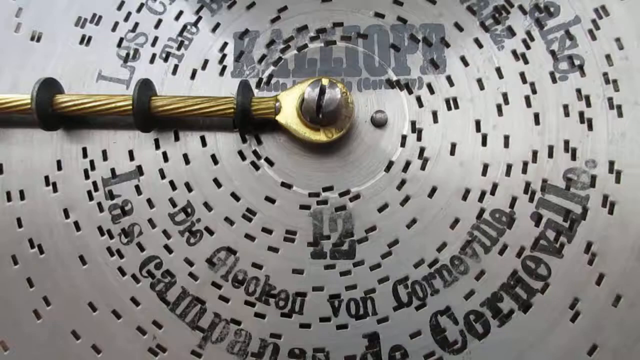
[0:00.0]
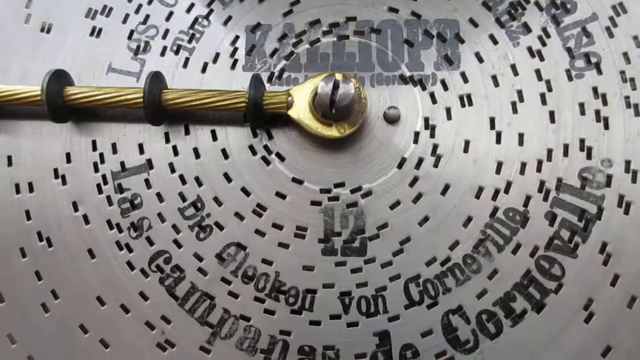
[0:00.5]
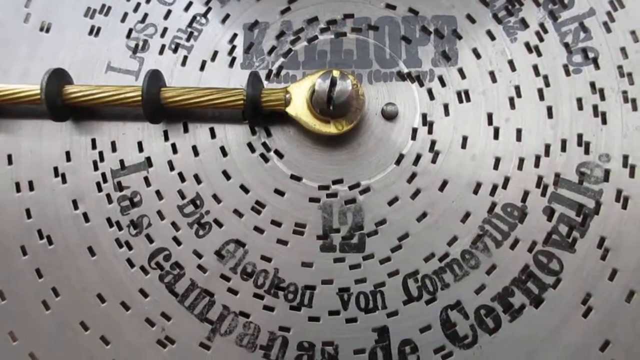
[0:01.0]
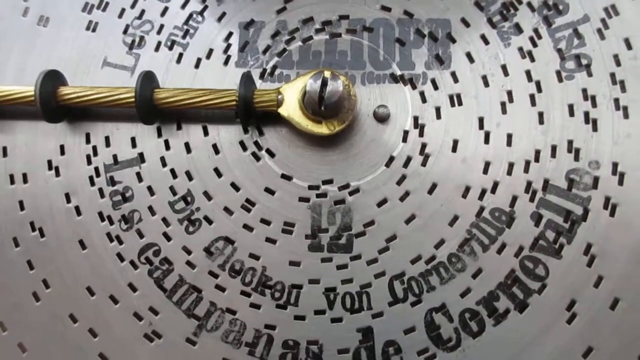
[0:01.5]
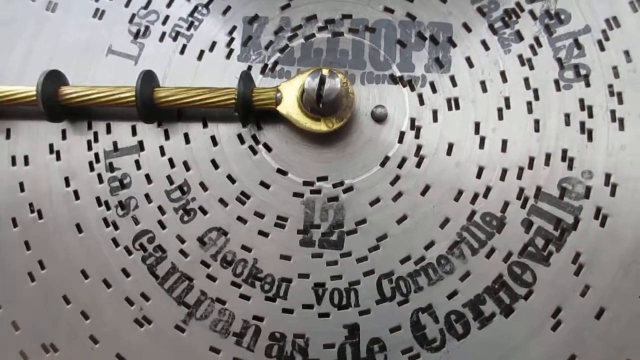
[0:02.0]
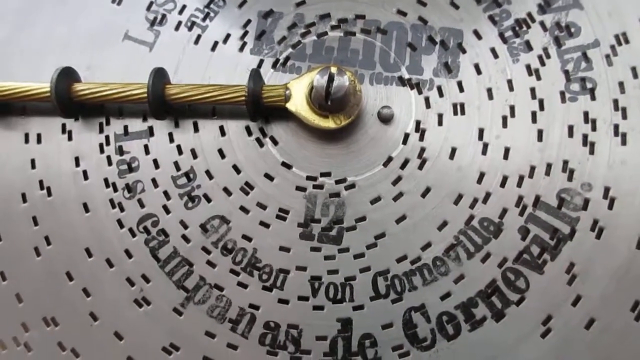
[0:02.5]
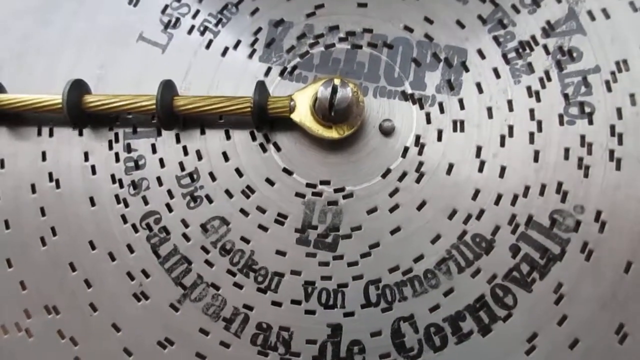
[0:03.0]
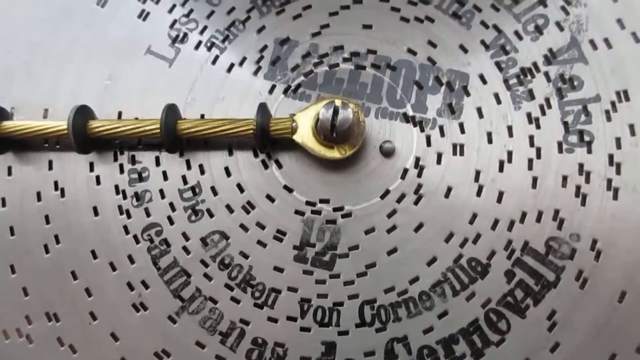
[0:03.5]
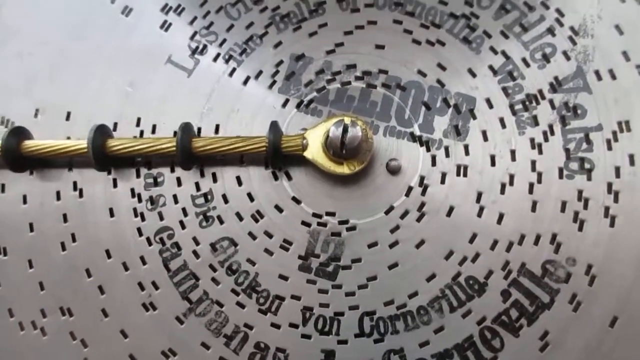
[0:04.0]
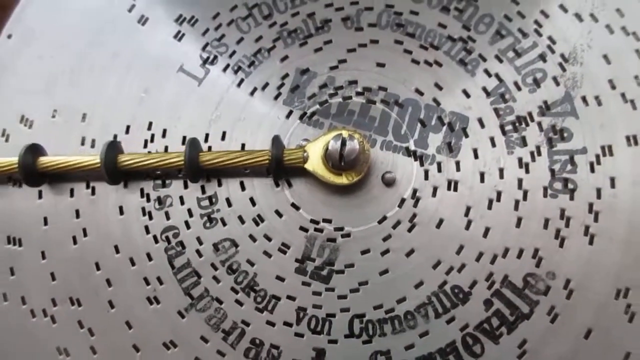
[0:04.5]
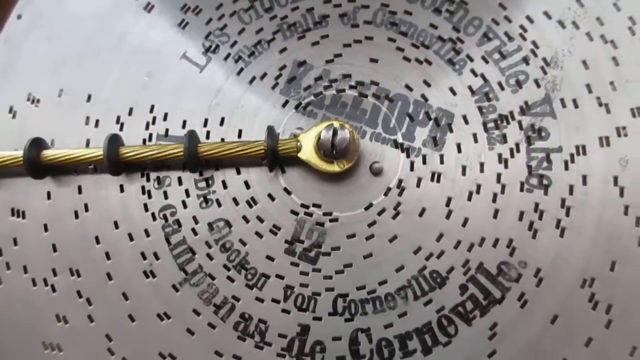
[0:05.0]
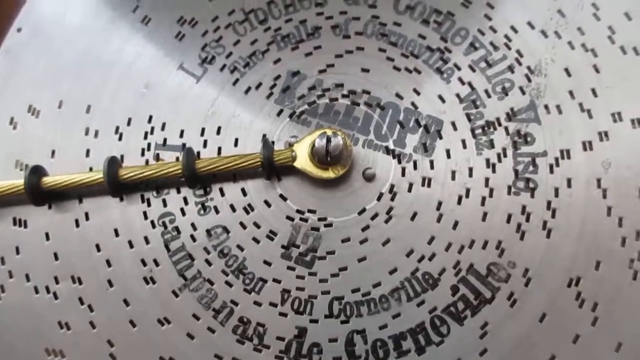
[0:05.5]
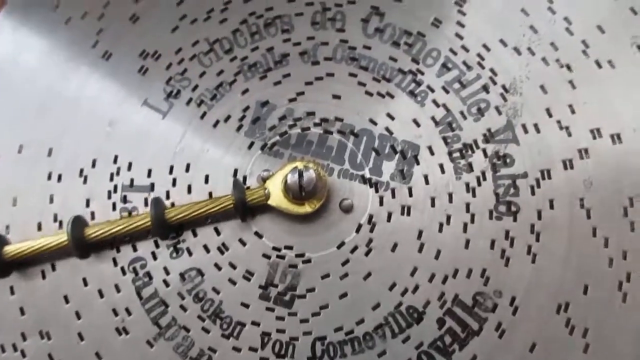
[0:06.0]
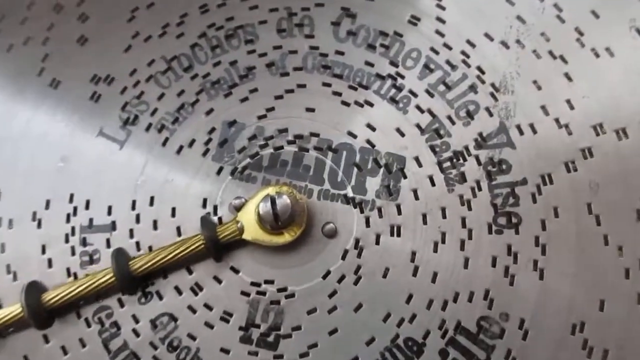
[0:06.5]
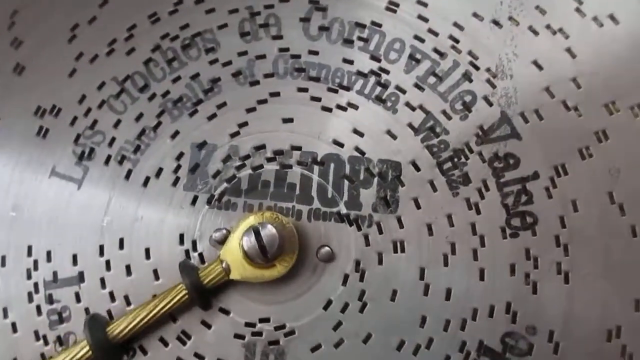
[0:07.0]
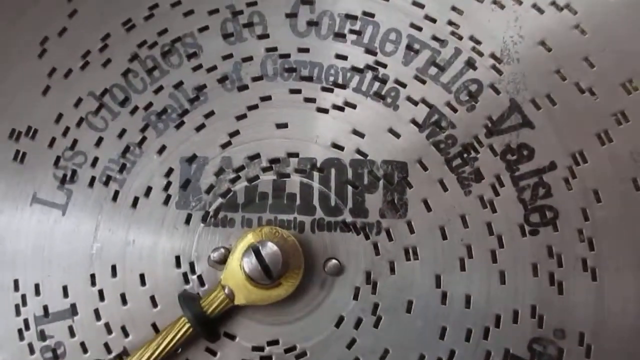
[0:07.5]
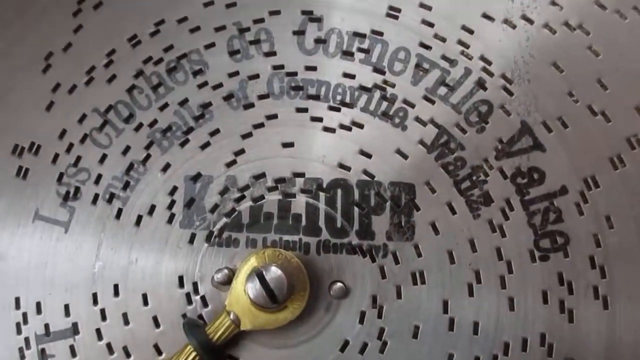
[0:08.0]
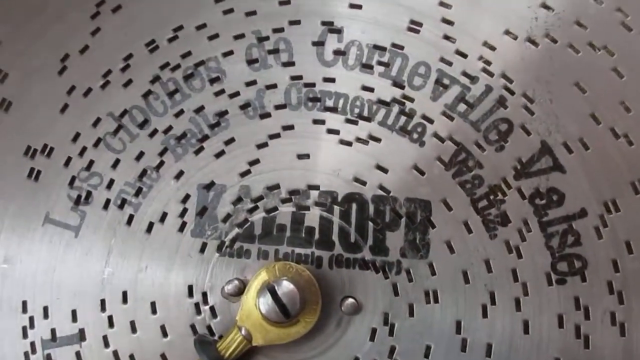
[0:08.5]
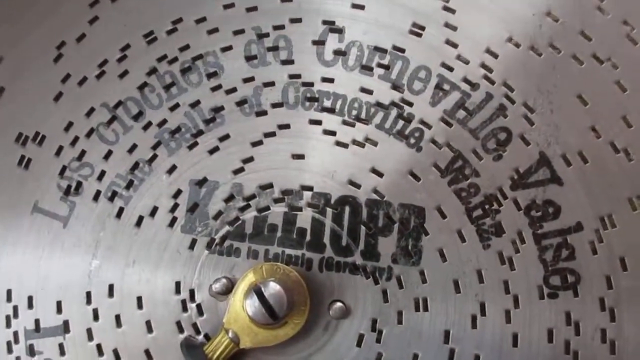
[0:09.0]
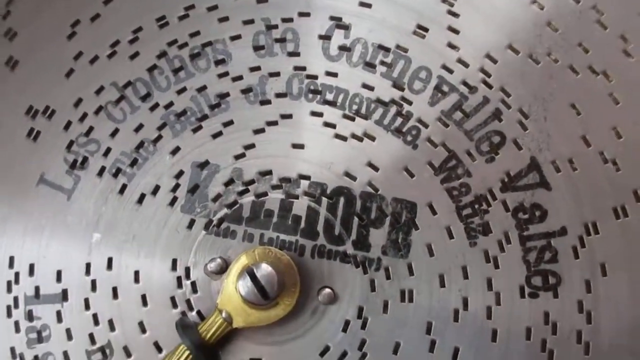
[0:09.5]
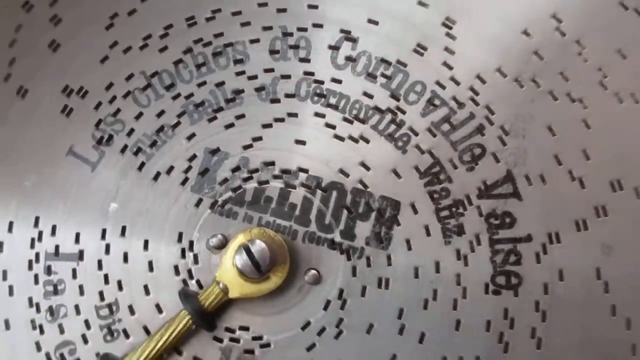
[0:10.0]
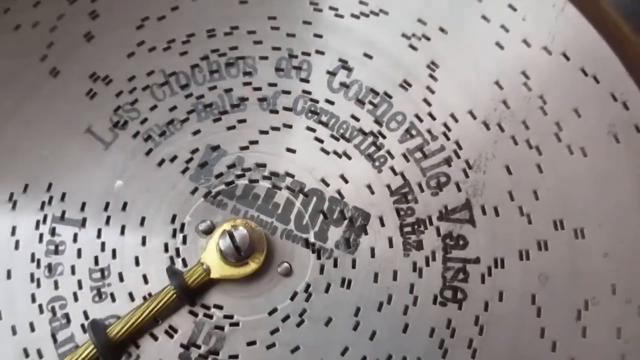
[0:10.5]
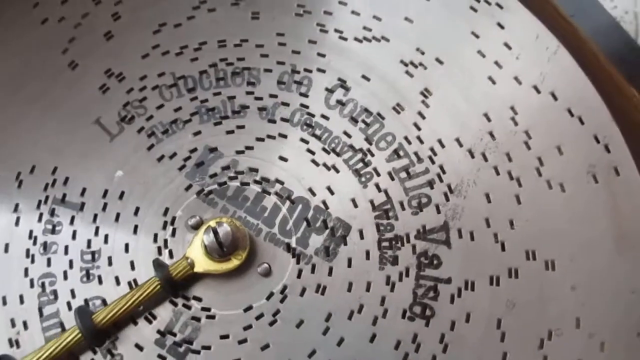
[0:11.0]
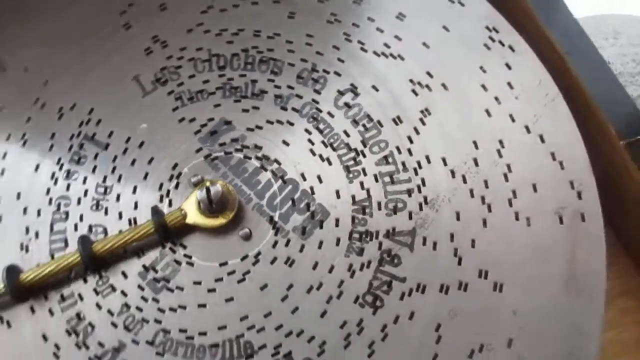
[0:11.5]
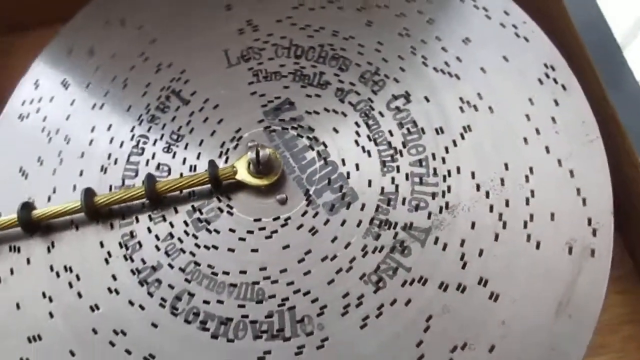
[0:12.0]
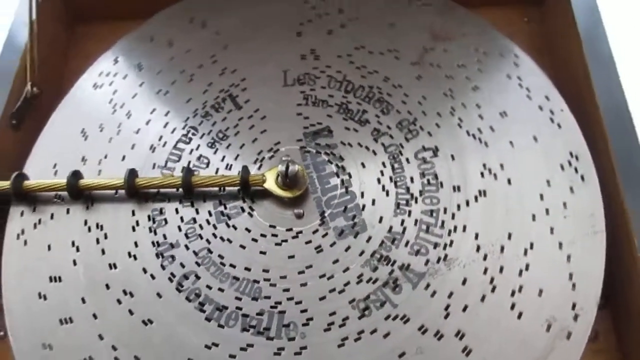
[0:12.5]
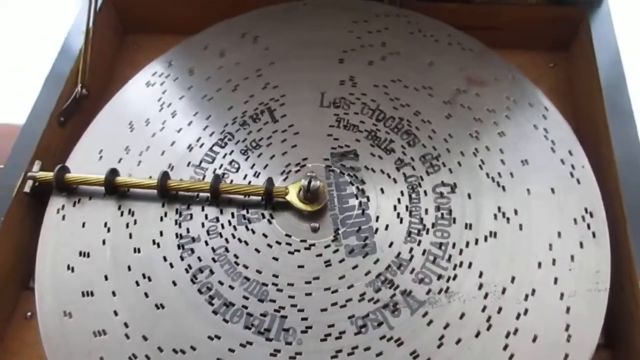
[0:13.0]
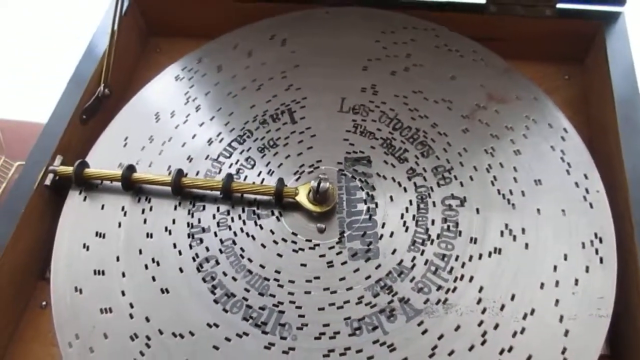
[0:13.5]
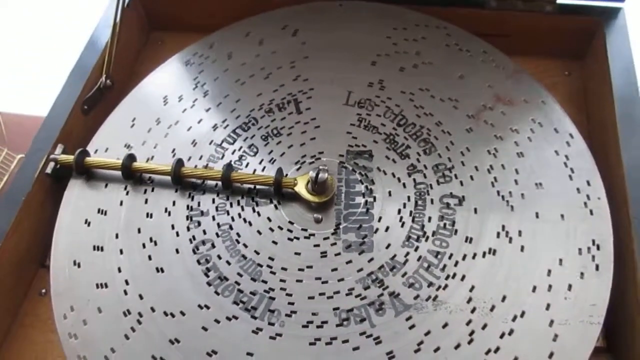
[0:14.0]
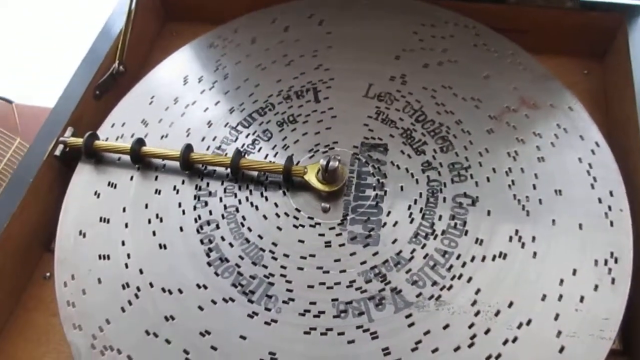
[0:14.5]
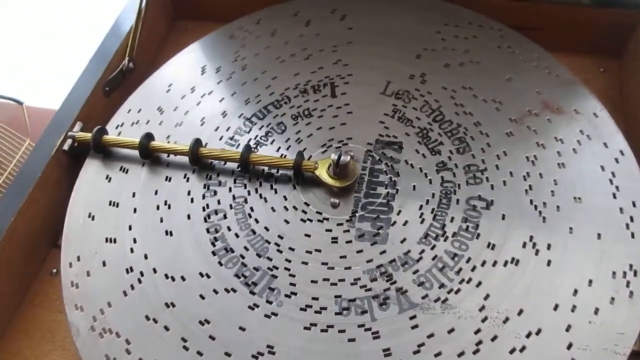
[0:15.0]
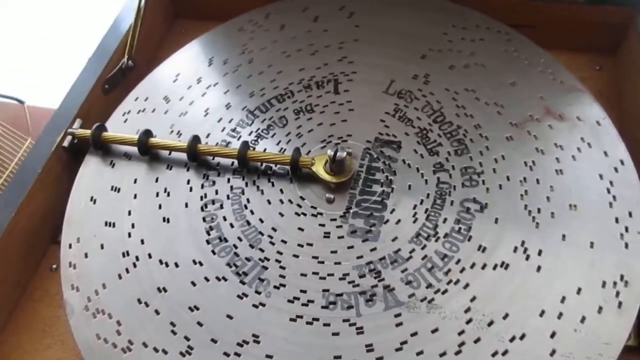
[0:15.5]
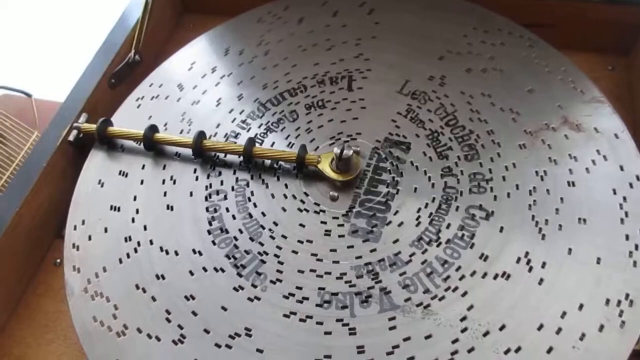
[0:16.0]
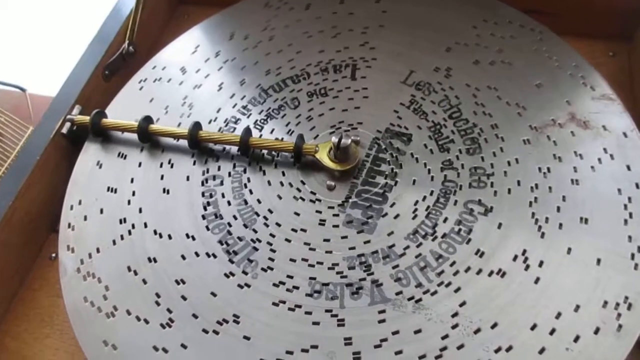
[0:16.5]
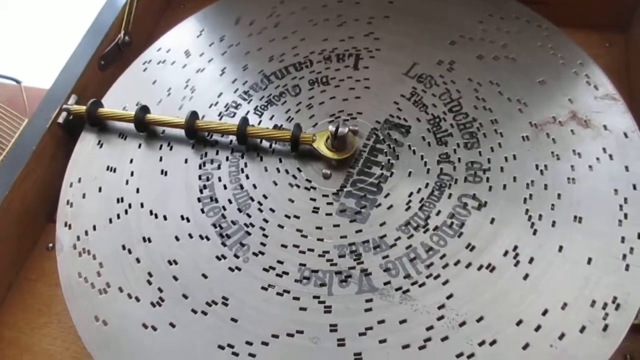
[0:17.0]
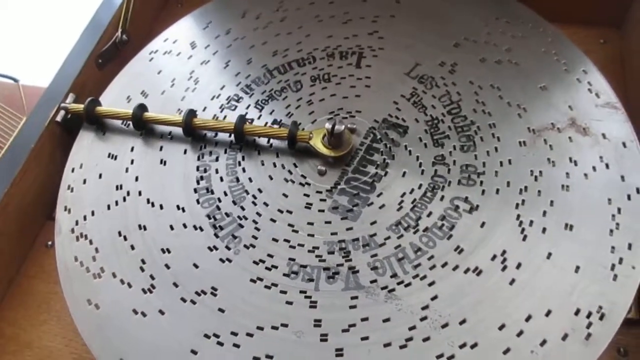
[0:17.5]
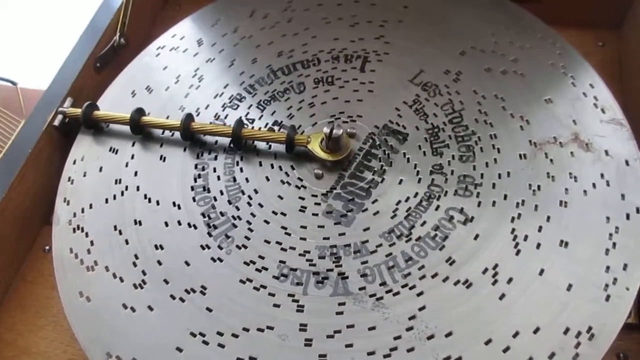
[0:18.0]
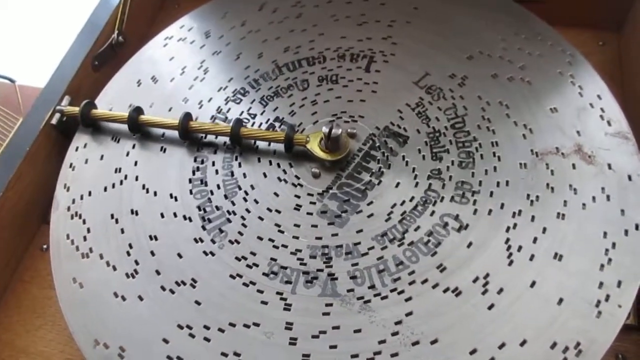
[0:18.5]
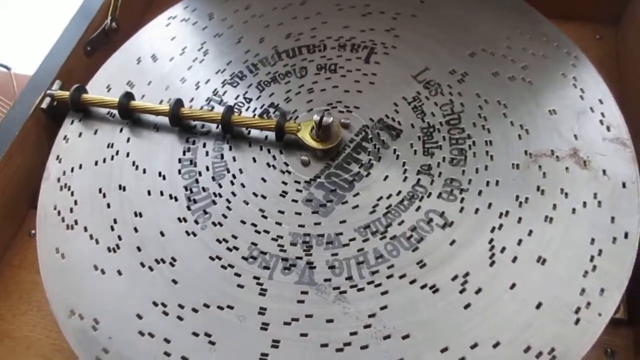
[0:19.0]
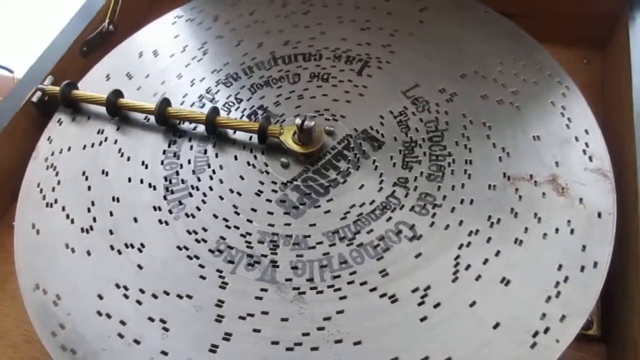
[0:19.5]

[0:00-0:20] A record is being played. The record is metallic and silver rather than traditional vinyl, with small slots in the metal that go all the way around in various sequences at different layers and depths. A gold-colored piece of metal is attached to the center, with four black circular pieces around the rod that extends out; as it moves across the record it kind of rides across the surface to produce the music and sound. The image is largely zoomed in and shows text written on the metal, which appears to be maybe French and is not in English. When the camera zooms out, the light brown interior of the box, or the inside of the record player the record is sitting in, becomes visible.